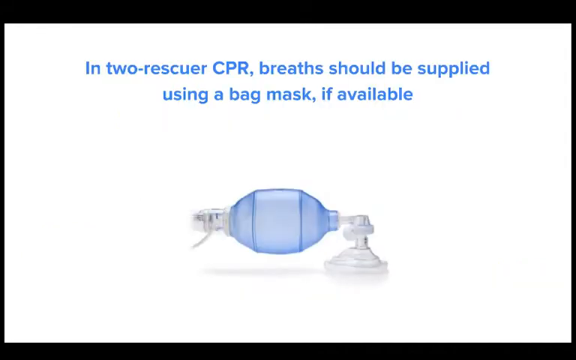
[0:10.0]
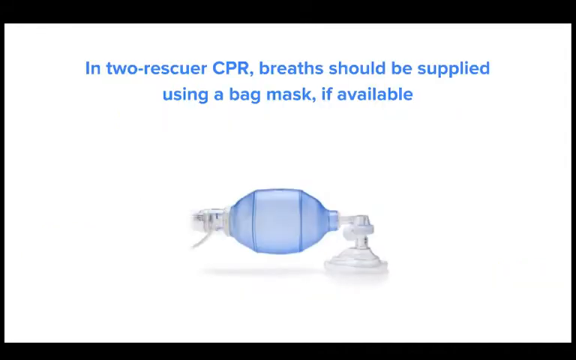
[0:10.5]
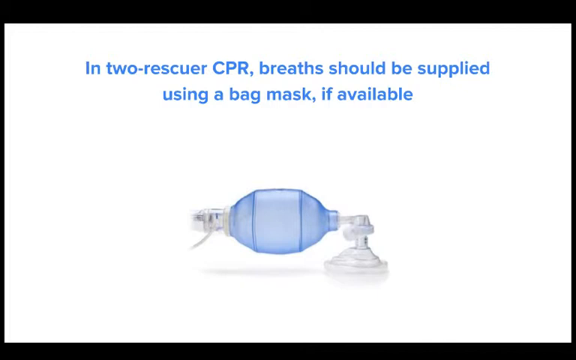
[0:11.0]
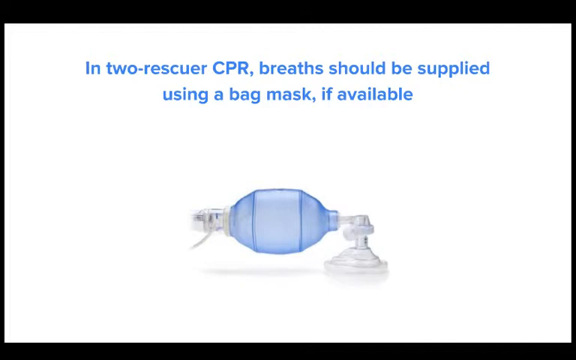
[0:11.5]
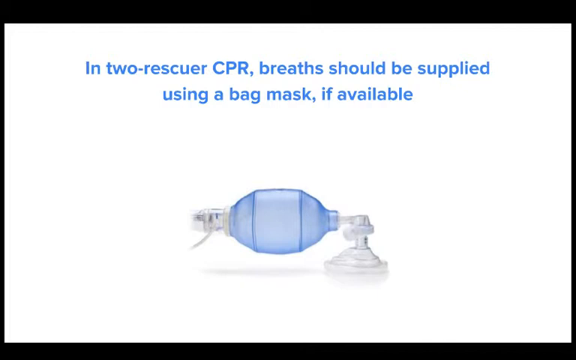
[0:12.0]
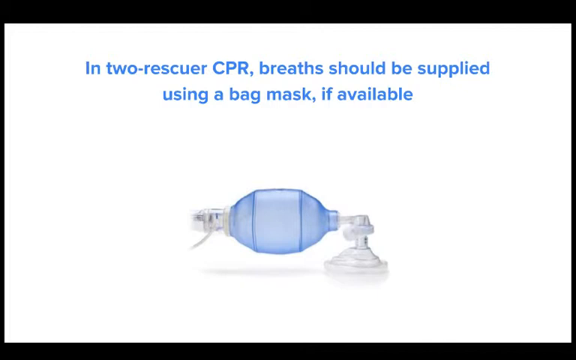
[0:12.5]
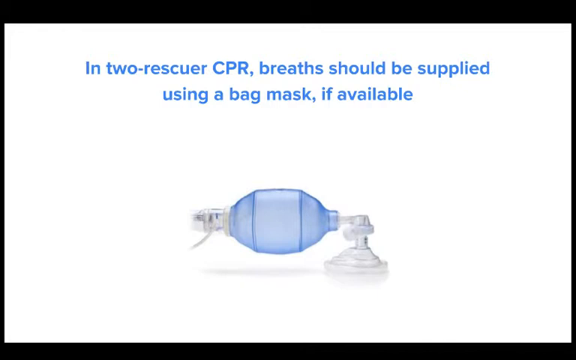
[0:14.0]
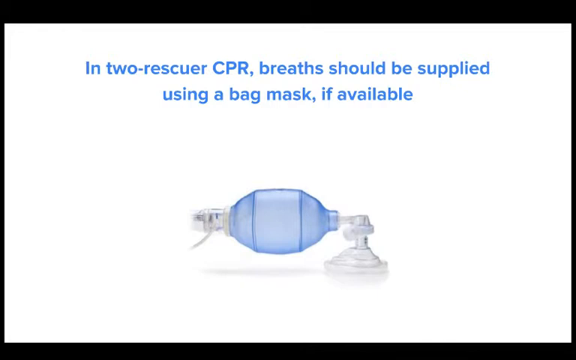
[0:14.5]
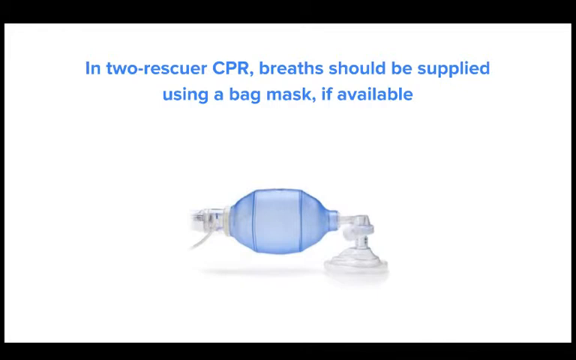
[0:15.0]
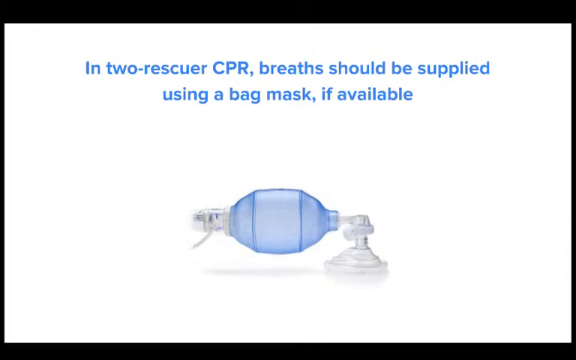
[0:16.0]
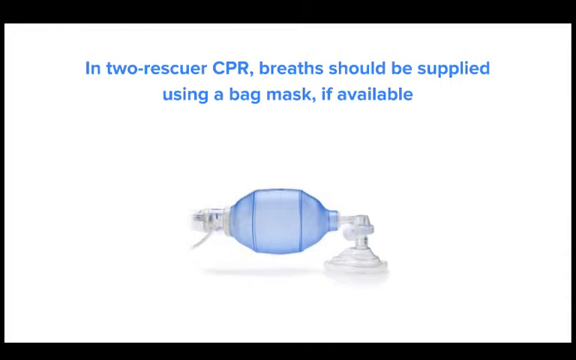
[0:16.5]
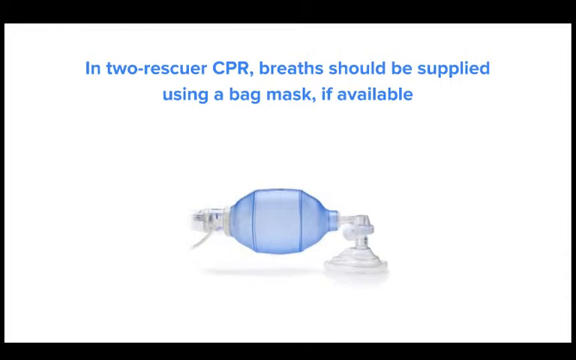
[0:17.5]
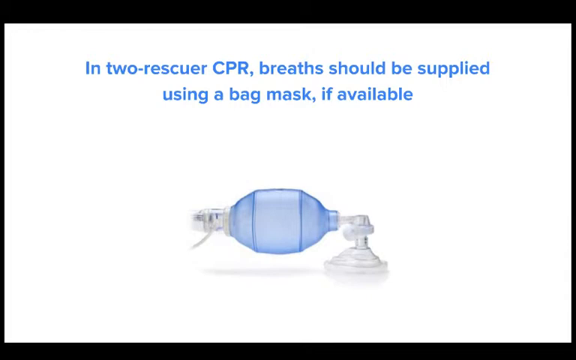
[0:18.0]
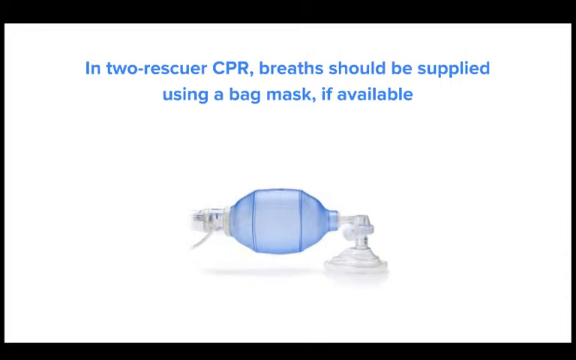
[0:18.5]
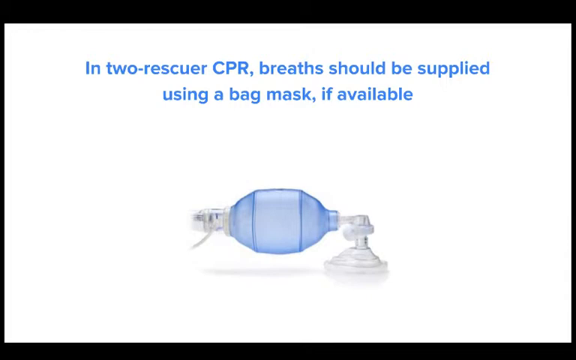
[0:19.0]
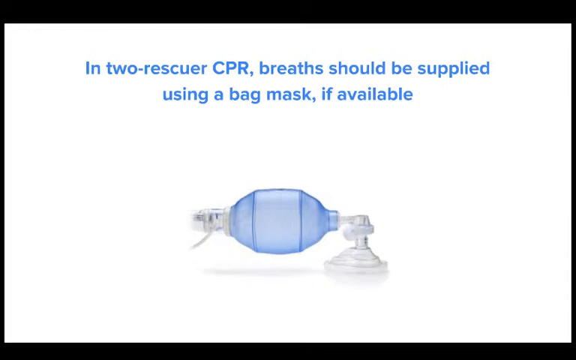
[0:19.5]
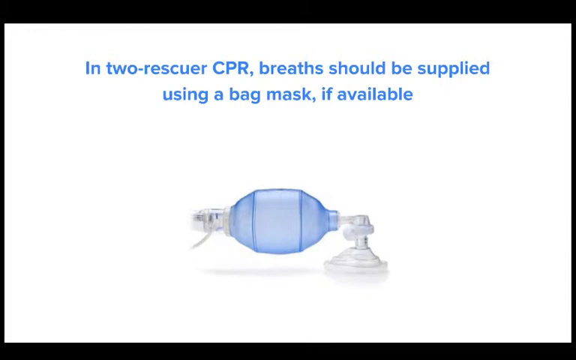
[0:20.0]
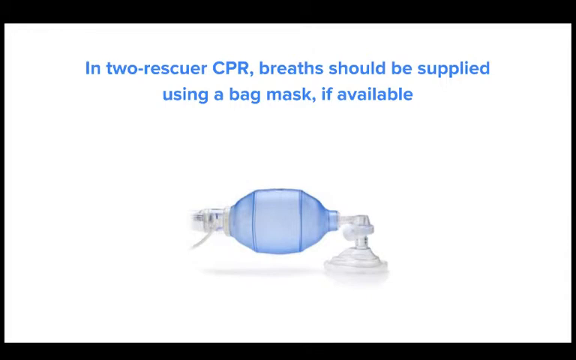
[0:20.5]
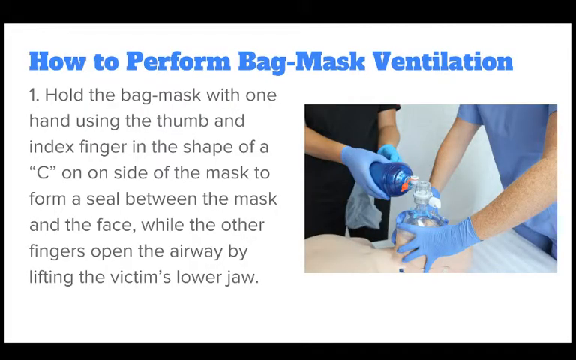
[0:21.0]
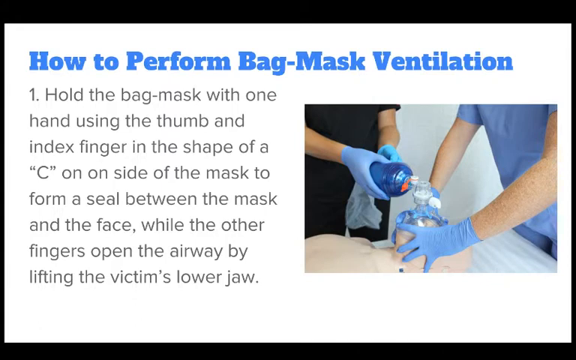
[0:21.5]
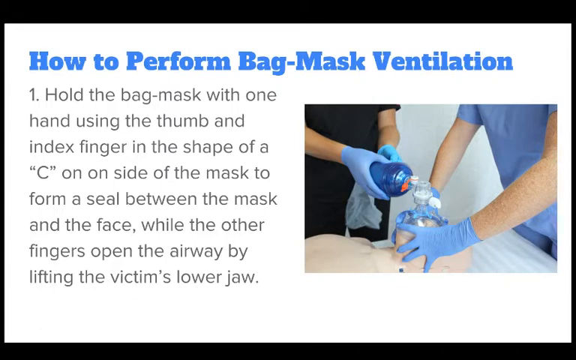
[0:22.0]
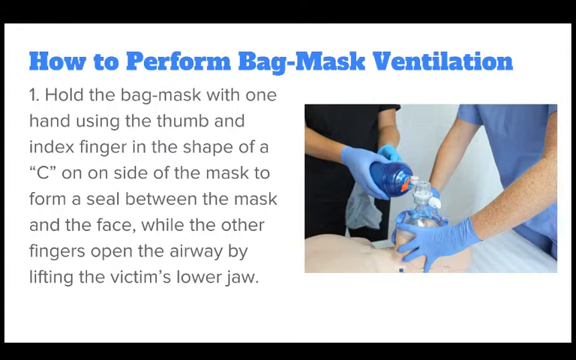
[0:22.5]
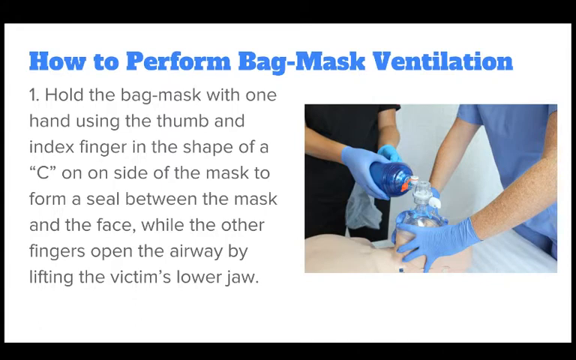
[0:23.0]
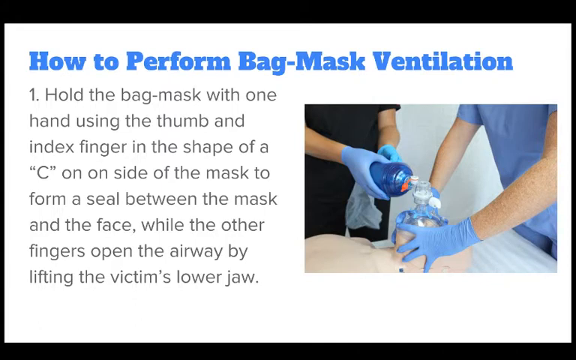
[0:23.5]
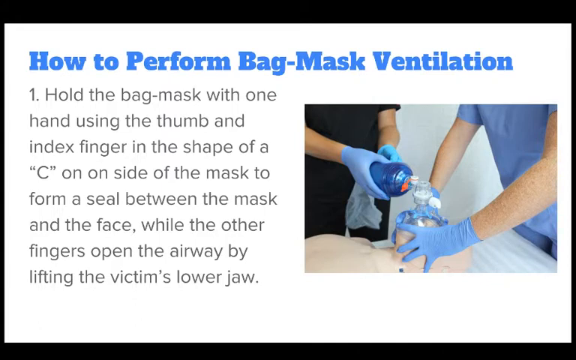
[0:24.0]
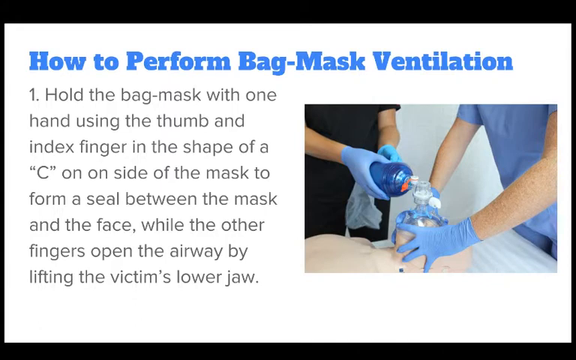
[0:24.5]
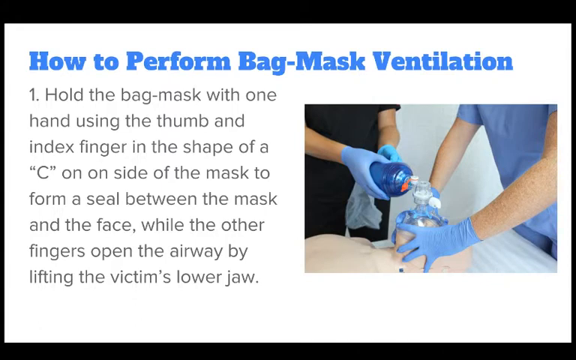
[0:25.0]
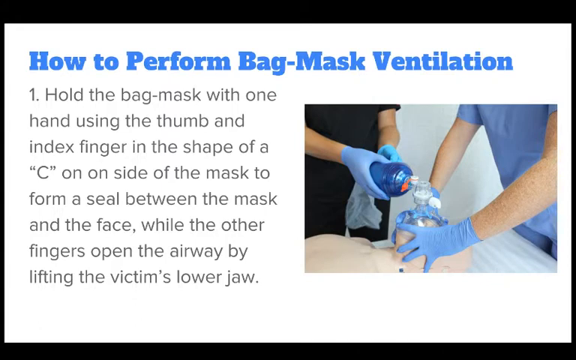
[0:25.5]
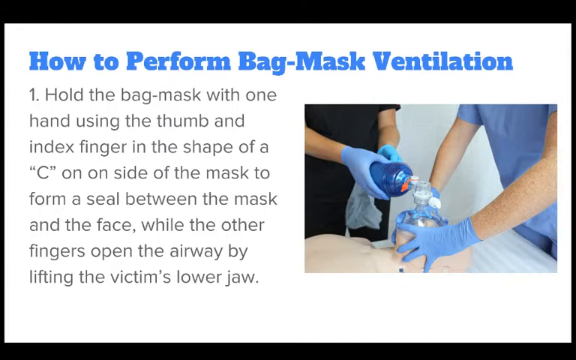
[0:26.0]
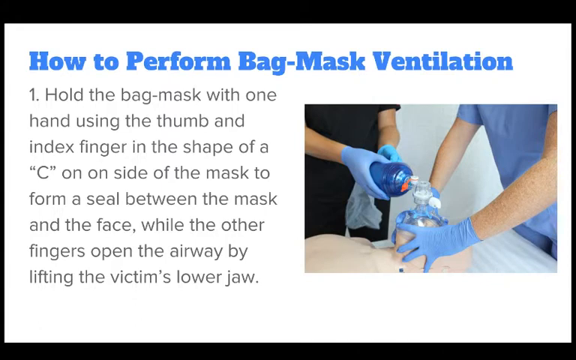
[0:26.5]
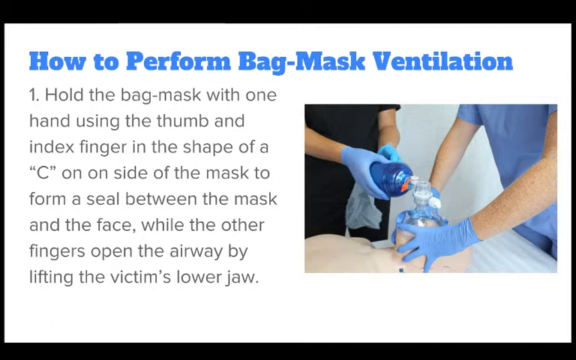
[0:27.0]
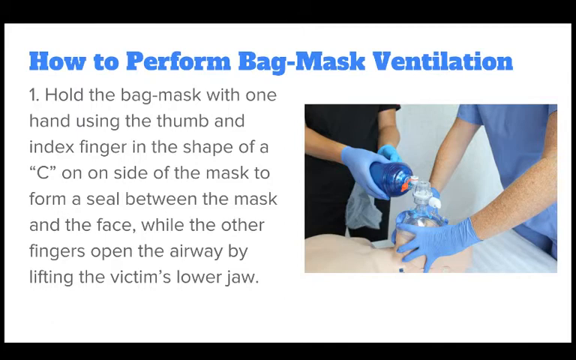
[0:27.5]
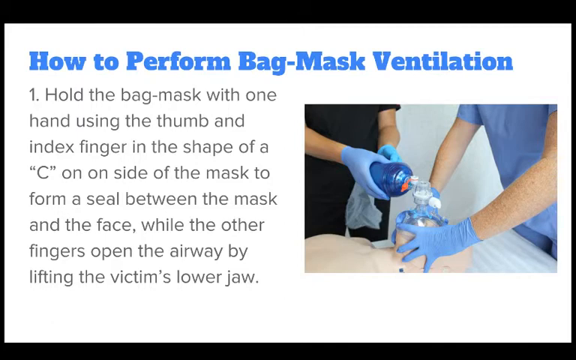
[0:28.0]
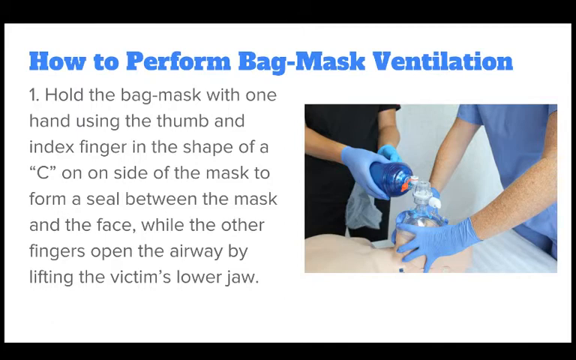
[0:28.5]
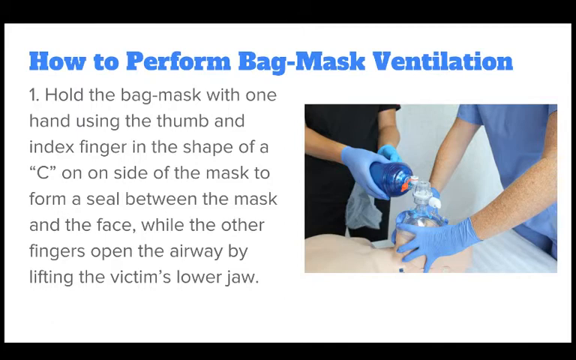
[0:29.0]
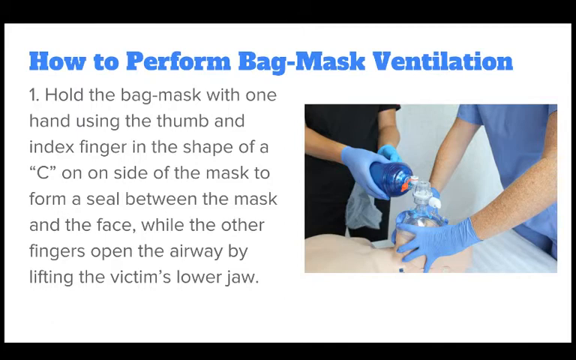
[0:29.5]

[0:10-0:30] The same screen with the picture of the bag mask below the text remains, and then the video moves to another slide-like screen. At the top, in blue text, it says "How to Perform Bag-Mask Ventilation", in initial caps with a hyphen between "Bag" and "Mask". On the right side is a rectangular photograph of two people placing a bag mask on the face of a dummy. Only the head and chest of the dummy are visible; it is lying on its back. Only the people's torsos and their arms sticking forward are visible. The person on the left, in a black outfit and light blue surgical gloves, is holding and slightly pushing down on the inflatable part of the bag mask, which looks kind of like a tube. The person on the right, wearing the same surgical gloves and a matching shirt and pants (little of the pants is visible), has both hands around the mask part and is holding it down across the dummy's face. Beneath the headline and to the left of the image is the number 1, followed by what looks like eight lines of text reading "Hold the bag mask with one hand using the thumb and index finger in the shape of a 'C' on on side of the mask." The text contains the typo "on on side", and the C is a capital C in quotation marks.